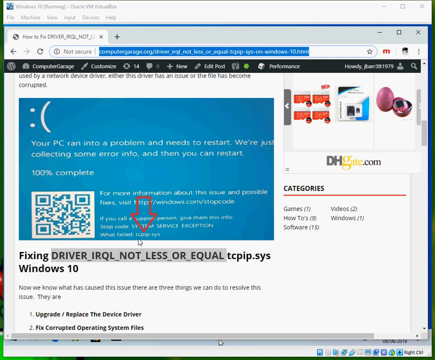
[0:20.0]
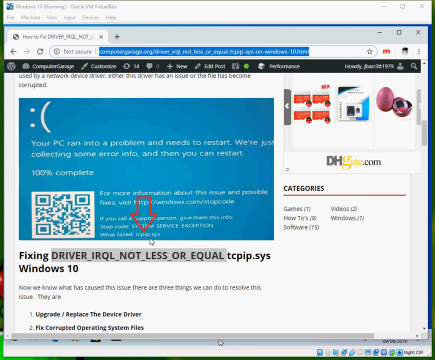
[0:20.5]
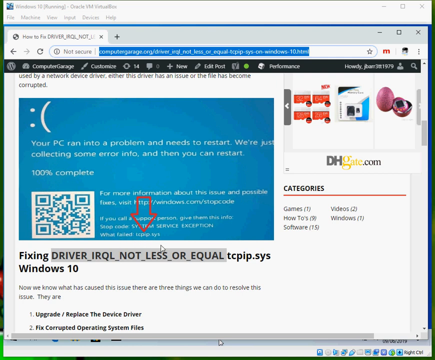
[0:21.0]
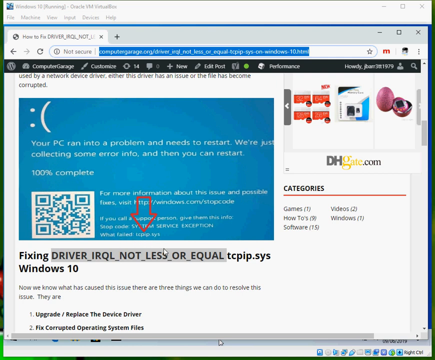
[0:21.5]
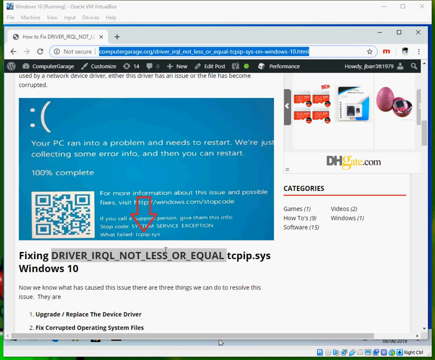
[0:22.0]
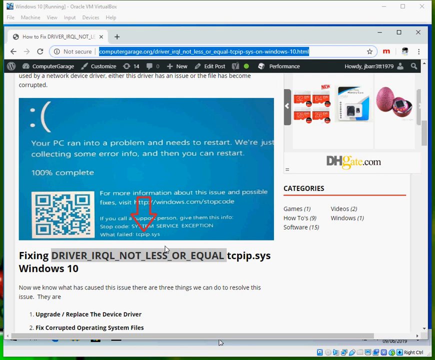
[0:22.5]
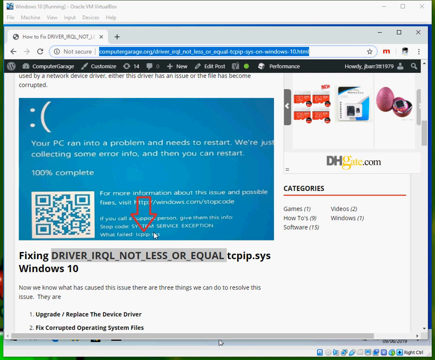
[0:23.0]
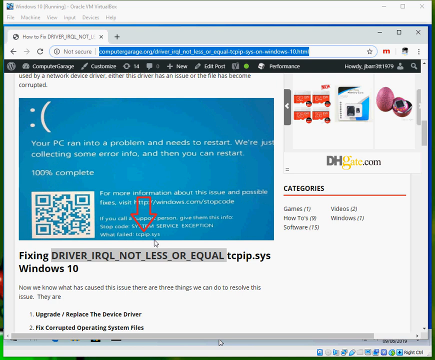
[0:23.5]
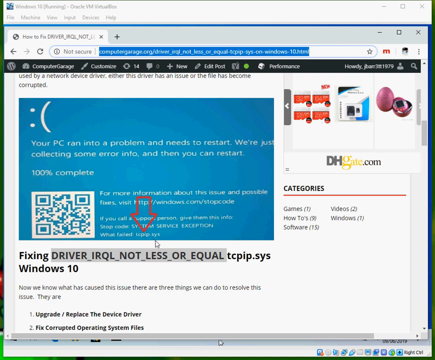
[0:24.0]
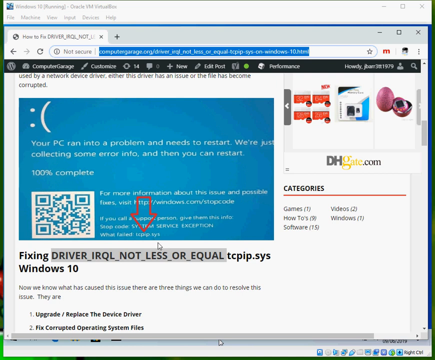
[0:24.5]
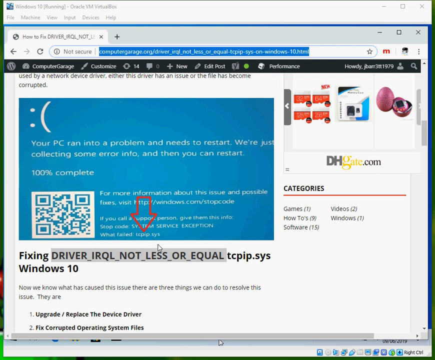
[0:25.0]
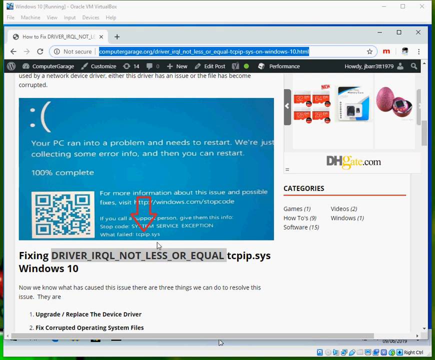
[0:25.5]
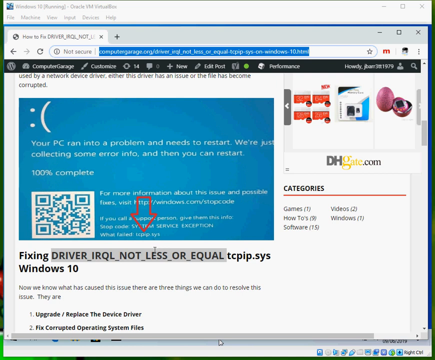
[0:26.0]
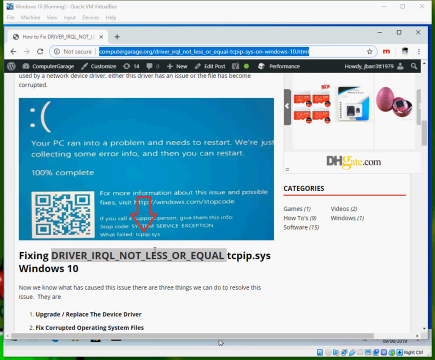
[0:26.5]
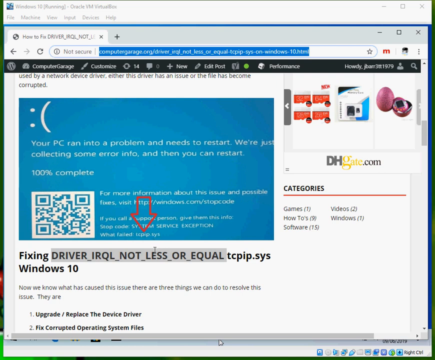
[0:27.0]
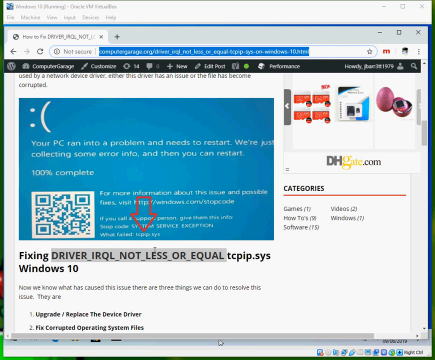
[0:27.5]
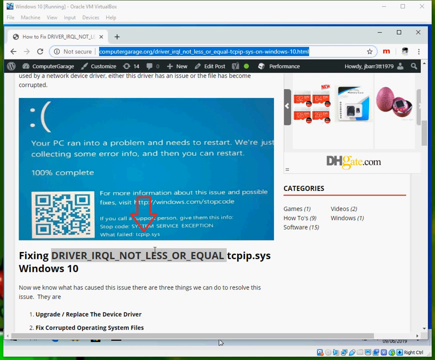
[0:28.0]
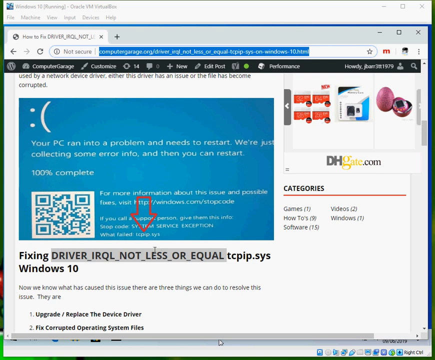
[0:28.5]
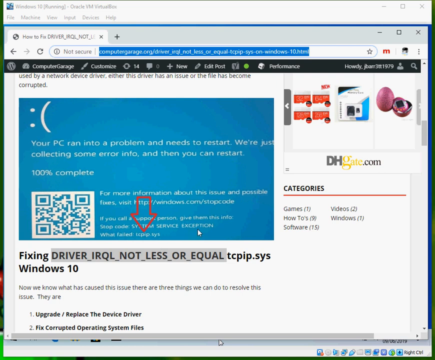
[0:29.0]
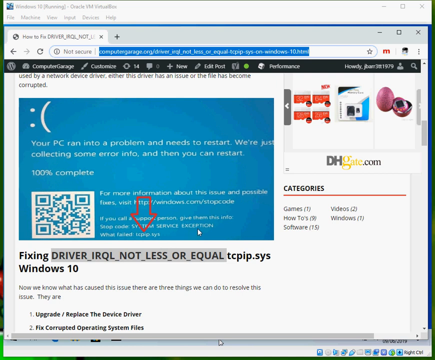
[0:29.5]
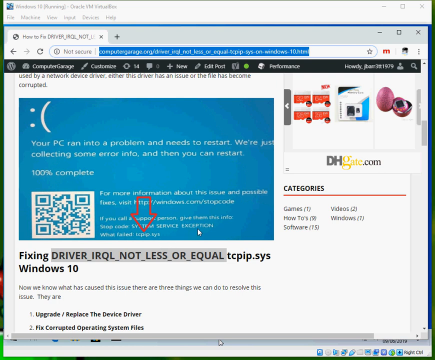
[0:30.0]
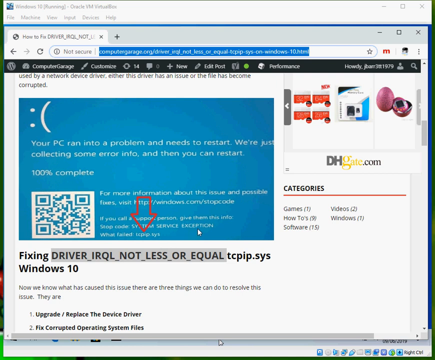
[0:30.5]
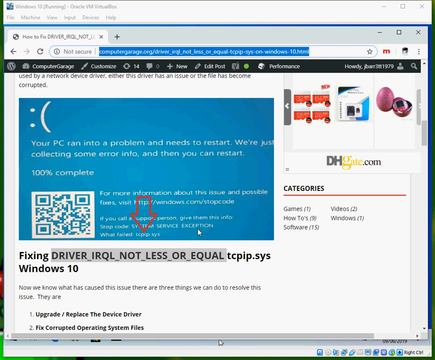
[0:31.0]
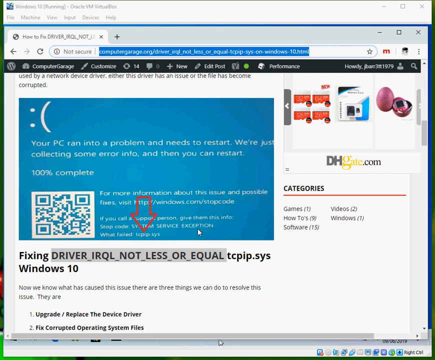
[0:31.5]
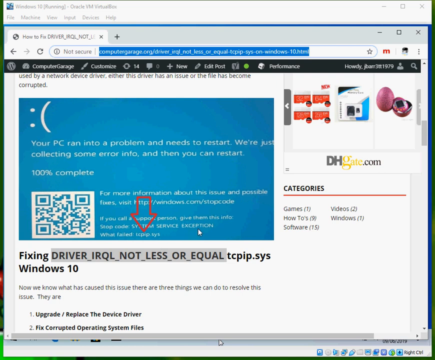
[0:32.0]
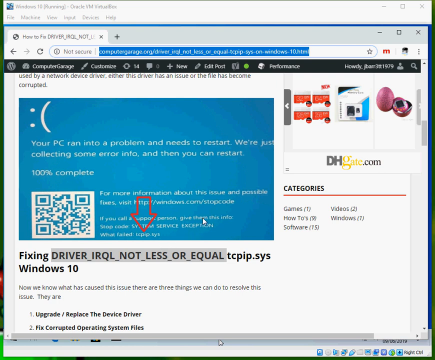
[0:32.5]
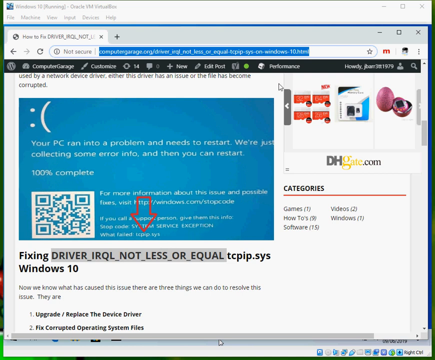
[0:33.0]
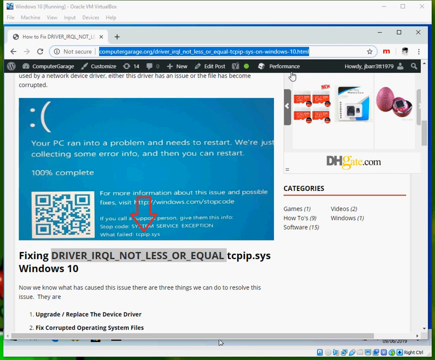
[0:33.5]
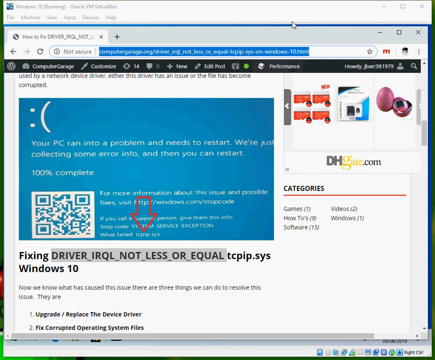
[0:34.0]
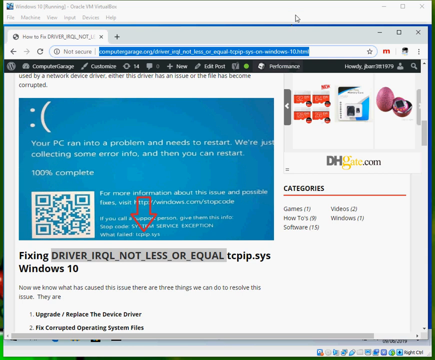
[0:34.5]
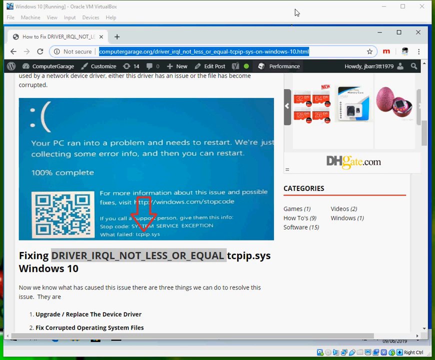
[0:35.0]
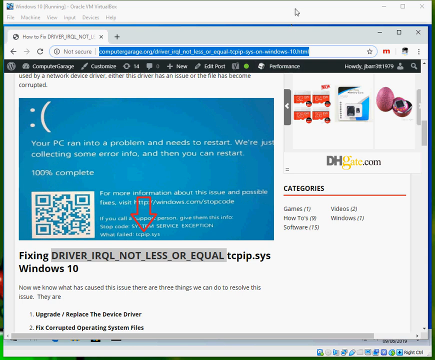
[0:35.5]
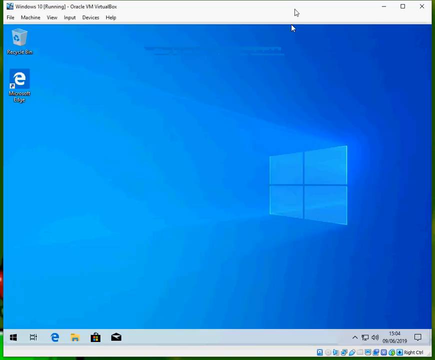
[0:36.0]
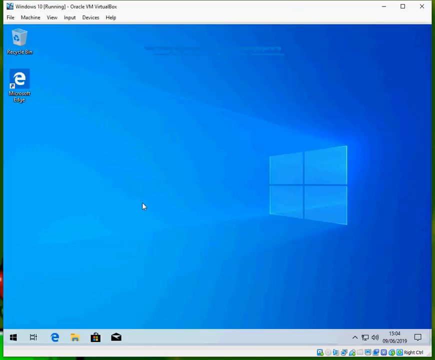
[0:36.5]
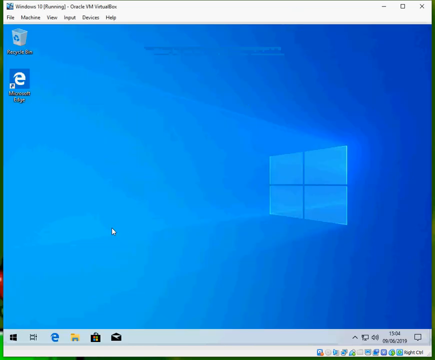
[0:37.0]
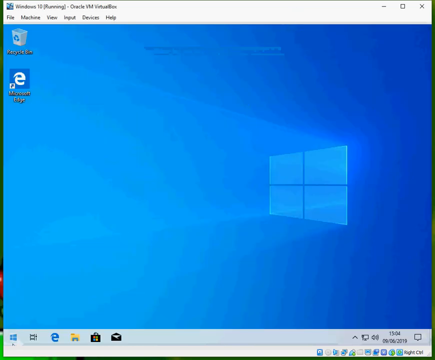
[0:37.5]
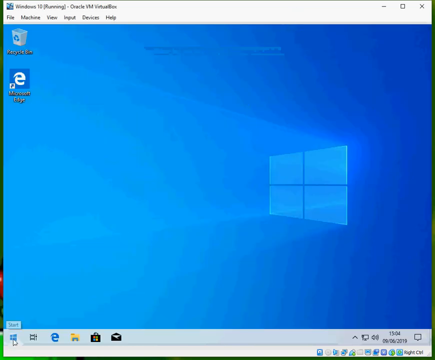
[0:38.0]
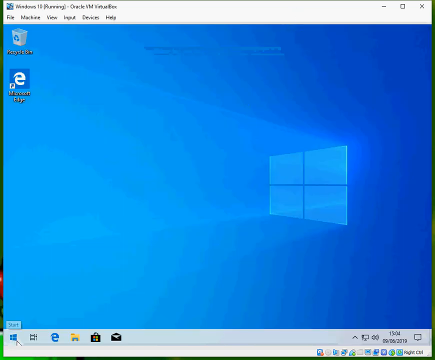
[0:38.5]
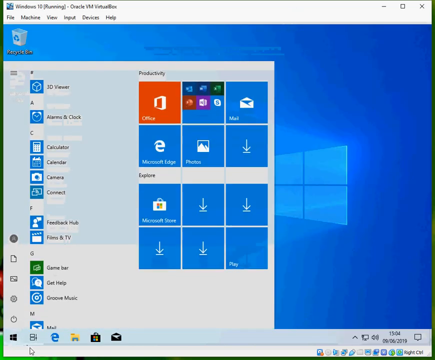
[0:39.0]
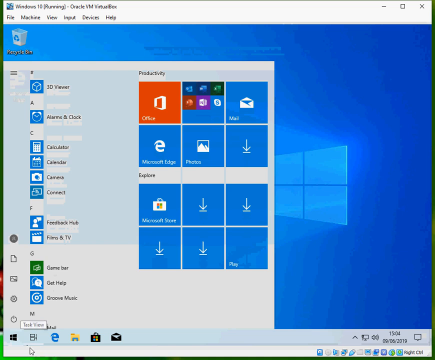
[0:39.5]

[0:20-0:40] A web page is shown on a Windows PC. A black bar at the top has the WordPress logo on the left, the words "Computer Garage" to the right of it, and the word "performance" at the far right, along with other choices. The main element is a note that reads "your PC ran into a problem and needs to restart. We're just collecting some error info and then you can restart," with text below stating it is 100 percent complete. There is a QR code to scan, and to the right of it is text about more information about this issue and possible fixes, with "Visit" and a link. A red arrow points downward to a message saying that a specific driver on the Windows 10 system is being fixed. A person moves a cursor around the box, the text and the links below it. The person then returns to the original Windows logo page, which is blue.